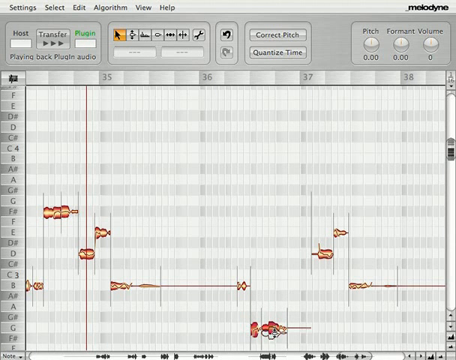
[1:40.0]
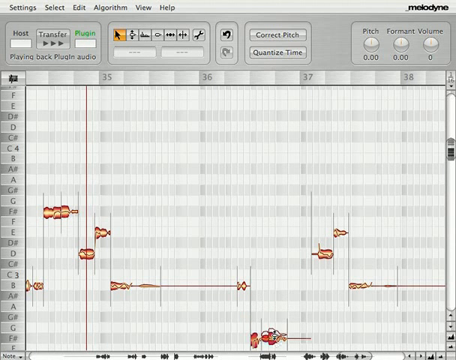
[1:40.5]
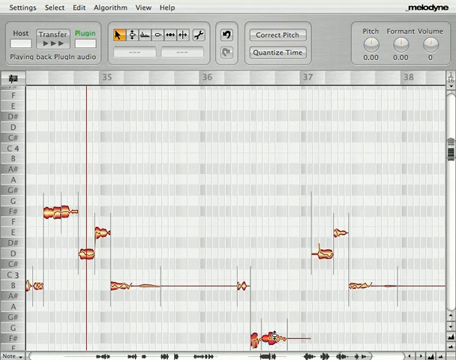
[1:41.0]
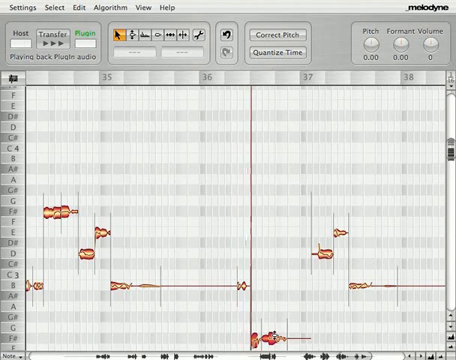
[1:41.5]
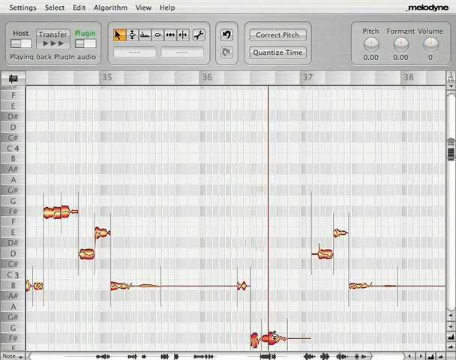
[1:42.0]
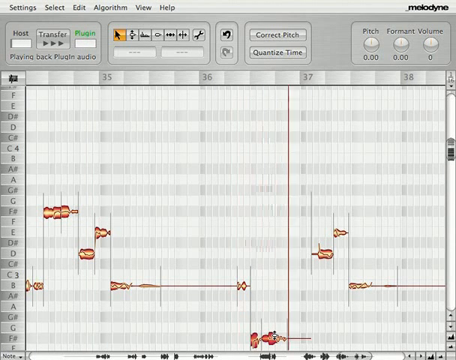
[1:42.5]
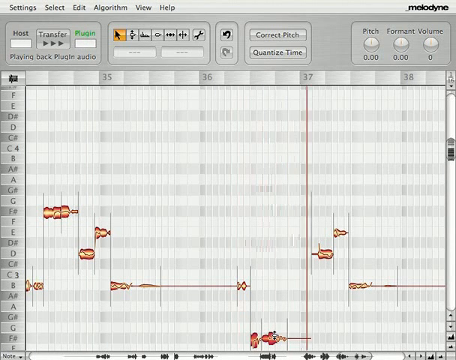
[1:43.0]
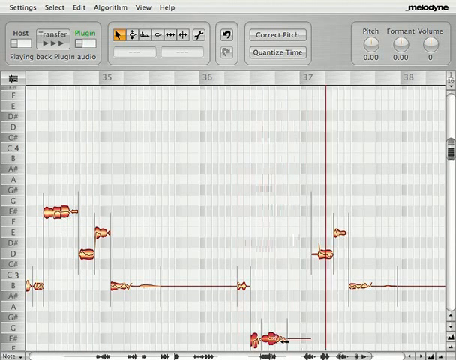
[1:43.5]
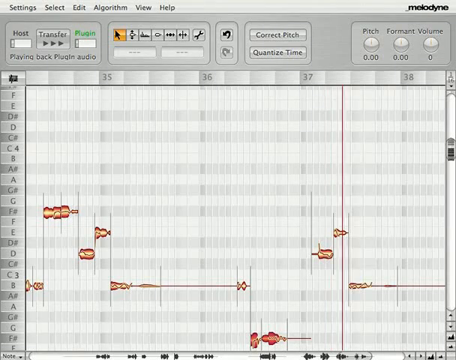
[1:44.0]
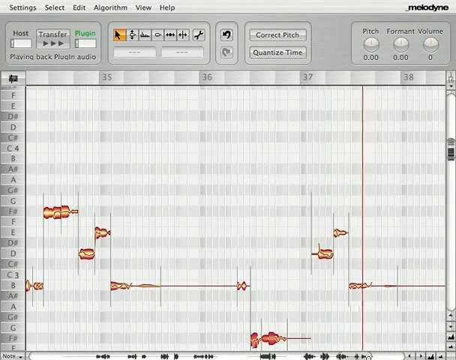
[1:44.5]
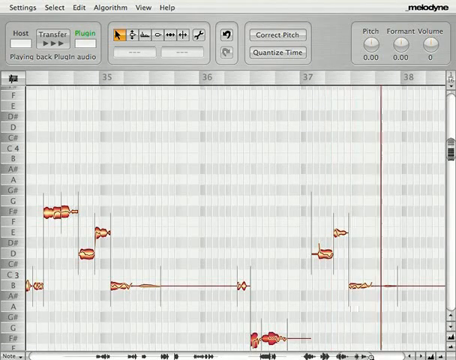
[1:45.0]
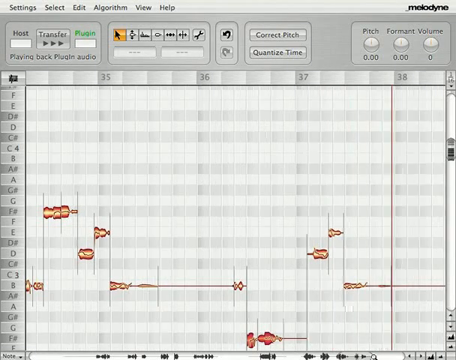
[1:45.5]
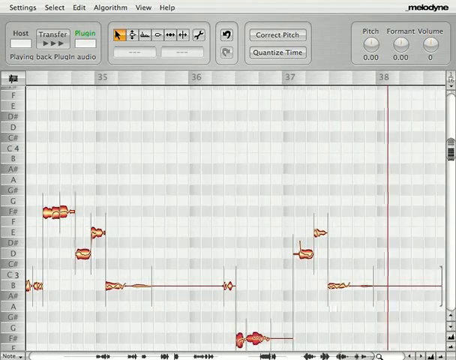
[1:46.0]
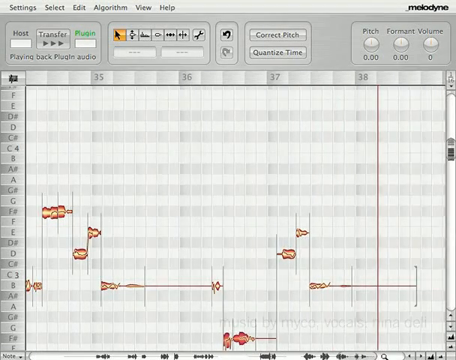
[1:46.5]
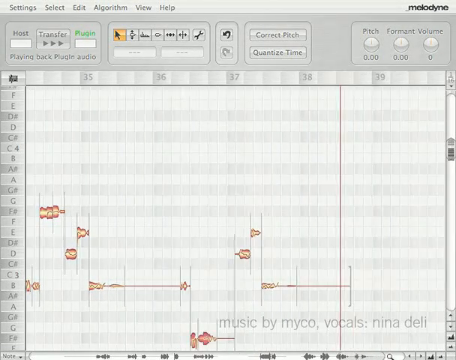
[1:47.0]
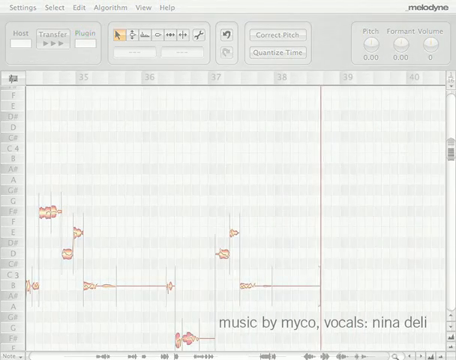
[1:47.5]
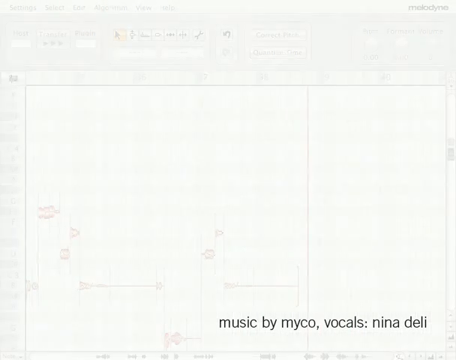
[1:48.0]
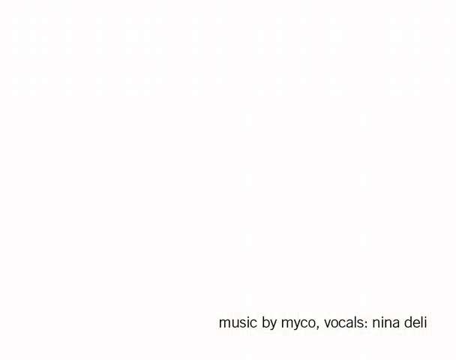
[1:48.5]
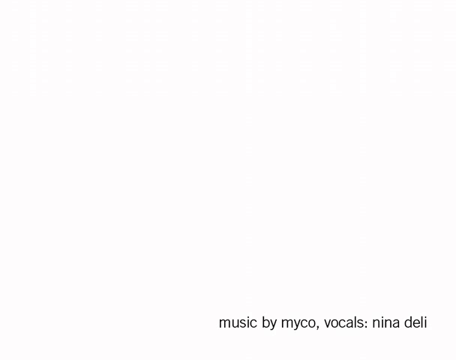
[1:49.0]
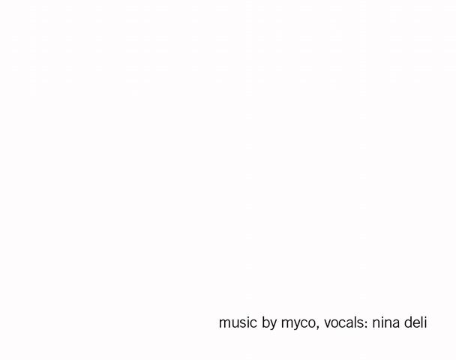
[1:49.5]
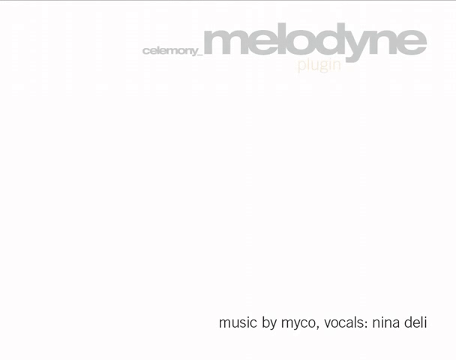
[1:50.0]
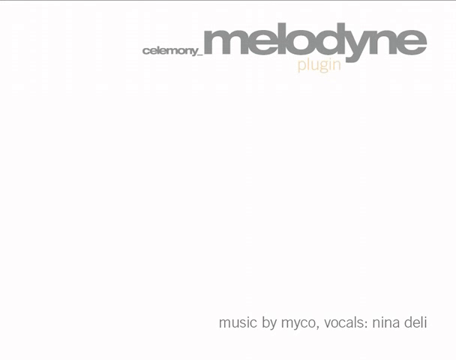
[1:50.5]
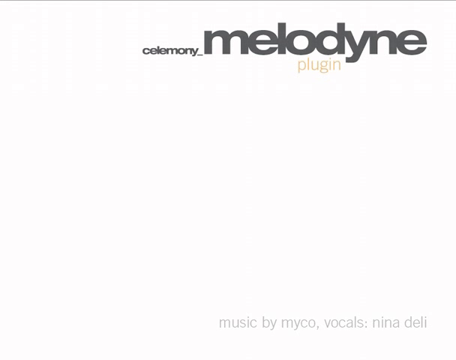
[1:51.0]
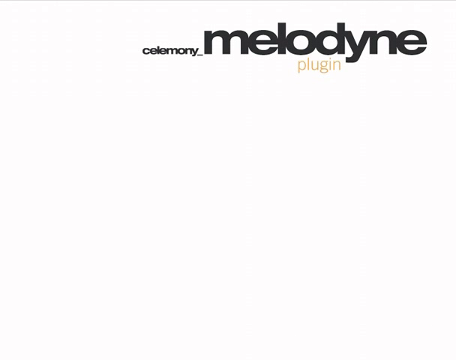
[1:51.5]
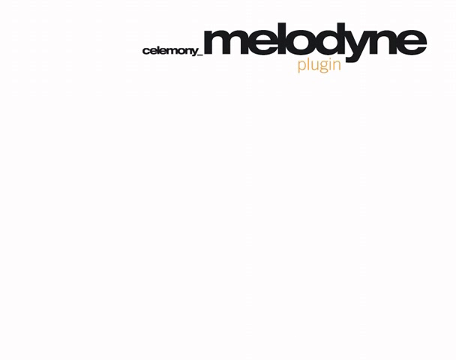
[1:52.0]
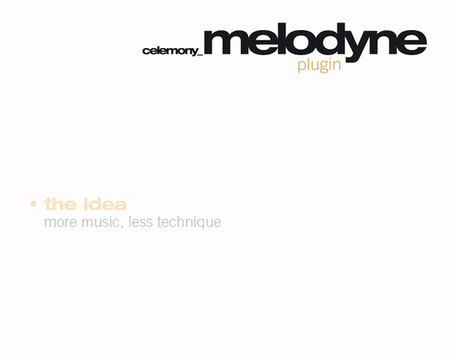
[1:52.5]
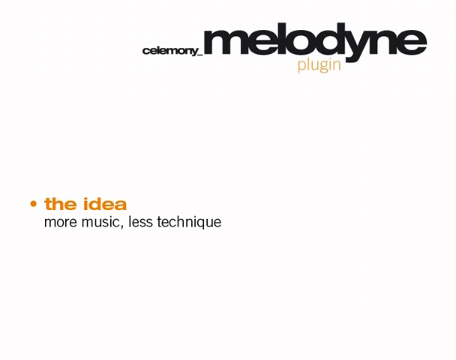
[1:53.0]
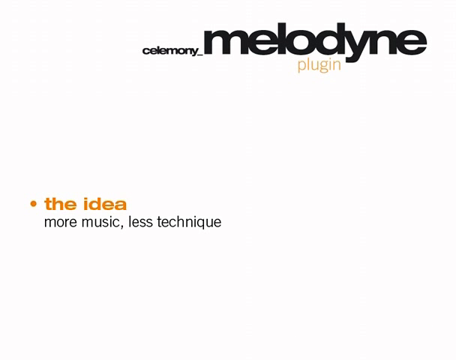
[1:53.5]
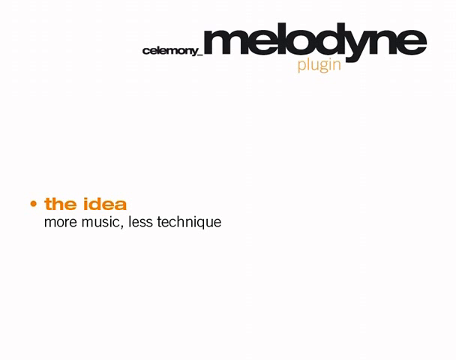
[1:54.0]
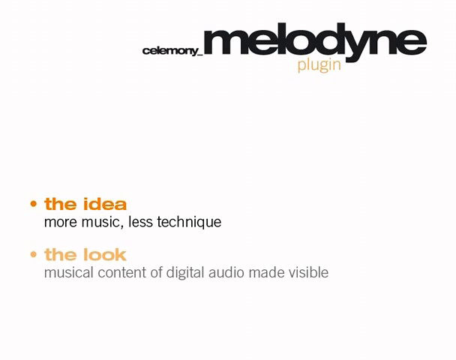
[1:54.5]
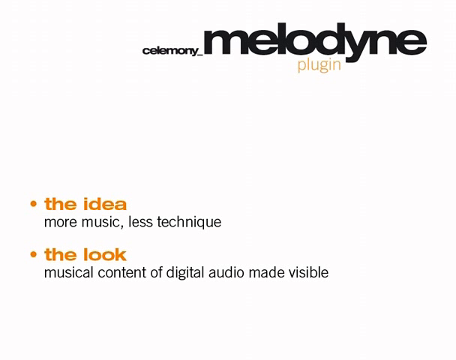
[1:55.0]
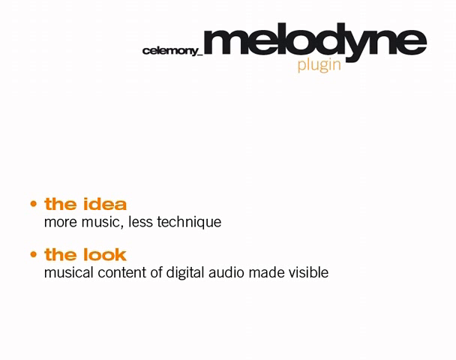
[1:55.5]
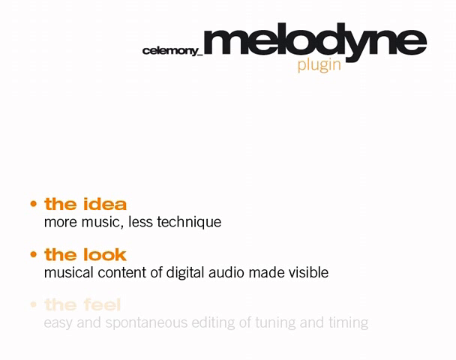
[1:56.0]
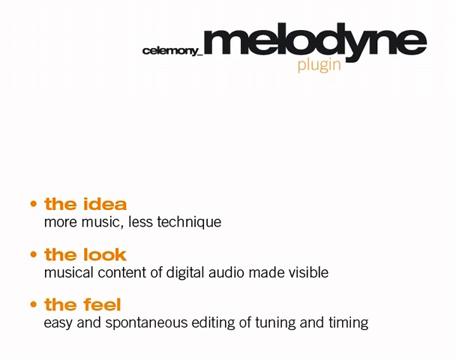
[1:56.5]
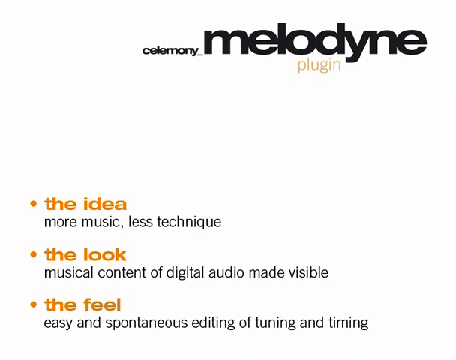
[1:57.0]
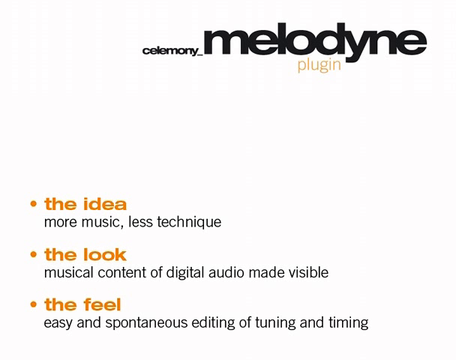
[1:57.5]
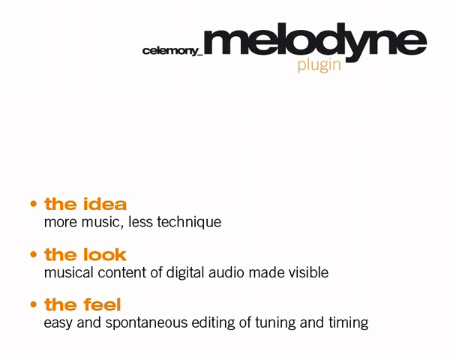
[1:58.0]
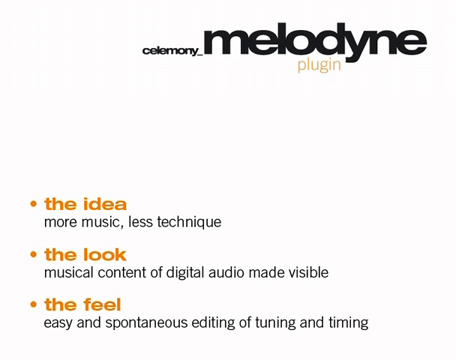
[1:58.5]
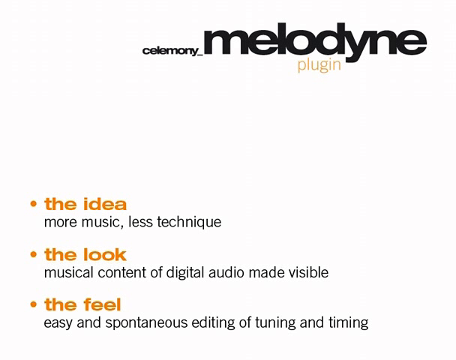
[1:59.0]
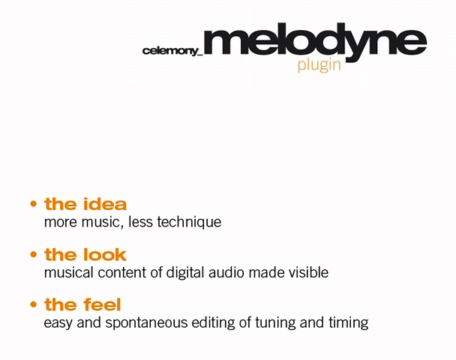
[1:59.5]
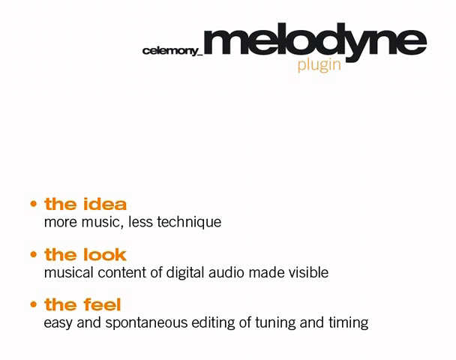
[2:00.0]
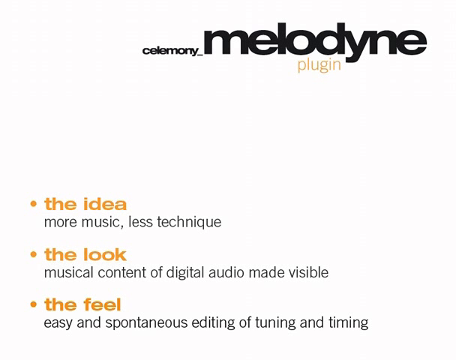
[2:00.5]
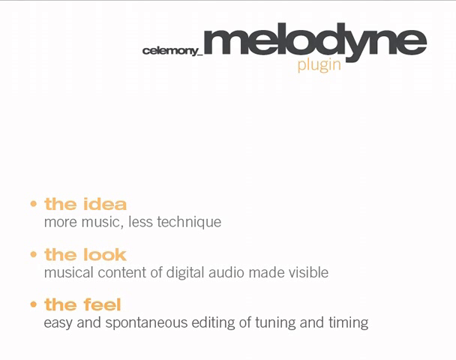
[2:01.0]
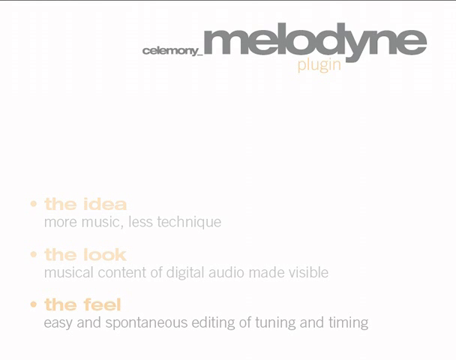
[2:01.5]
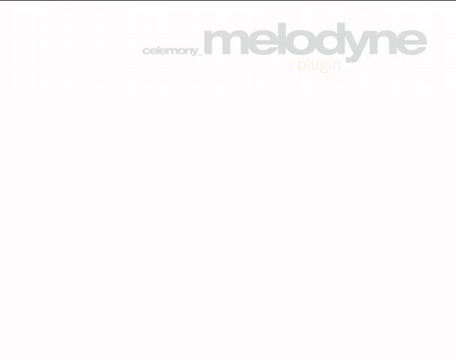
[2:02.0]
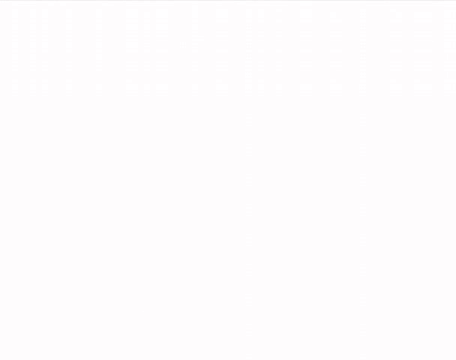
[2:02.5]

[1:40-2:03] The Melodyne music software is being used to manipulate musical notes, which appear in red and yellow in the center of the screen and are grabbed with the mouse and moved. Toward the end, text reads "Music by Myco, Vocals, Nina Deli." Then the Melodyne graphics, the logo for the Melodyne plug-in, appear at the top. At the end, text reads "The idea, more music, less technique, the look, musical content of digital audio made visible, the feel, easy and spontaneous editing and tuning, and timing."